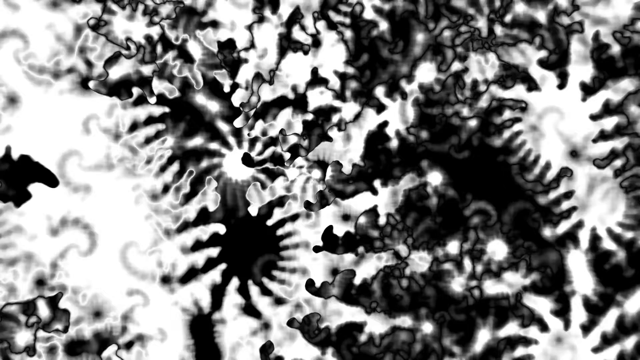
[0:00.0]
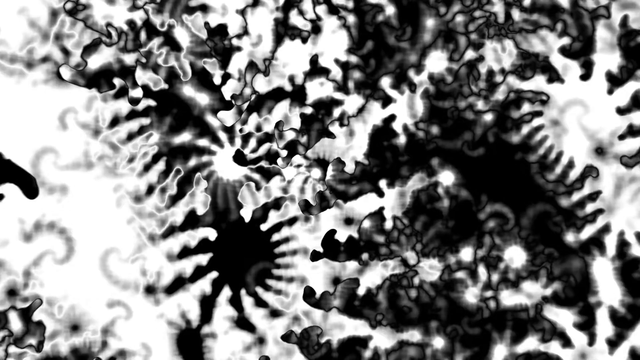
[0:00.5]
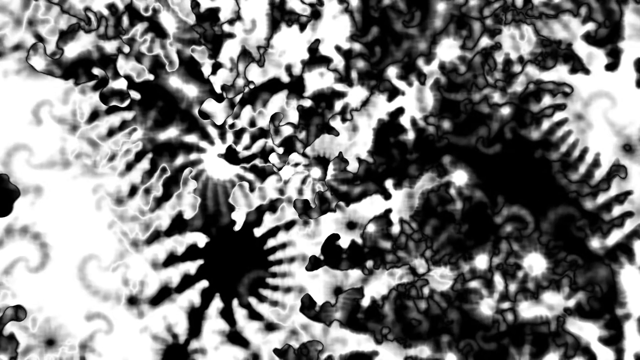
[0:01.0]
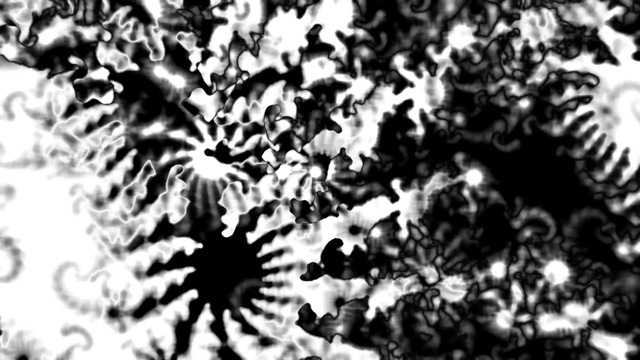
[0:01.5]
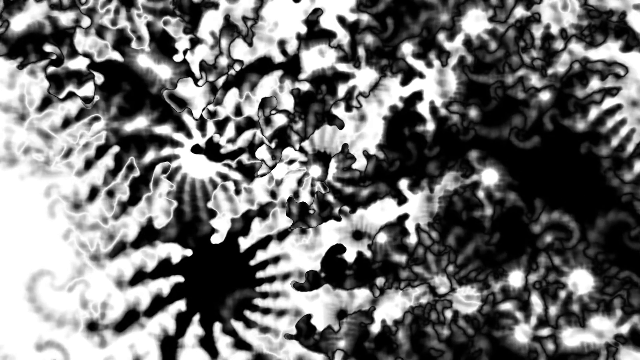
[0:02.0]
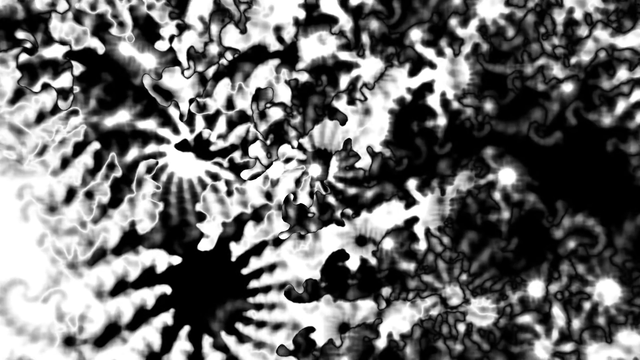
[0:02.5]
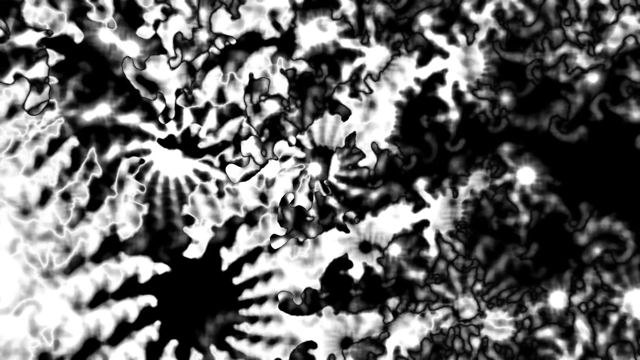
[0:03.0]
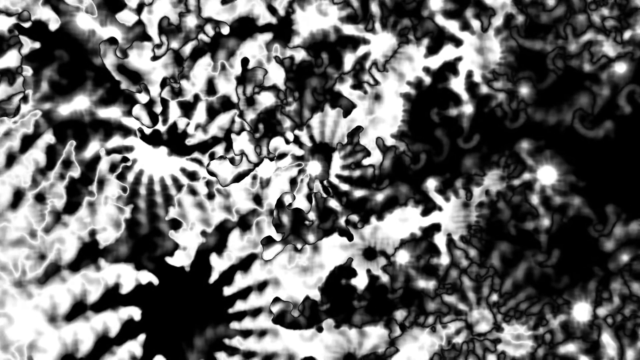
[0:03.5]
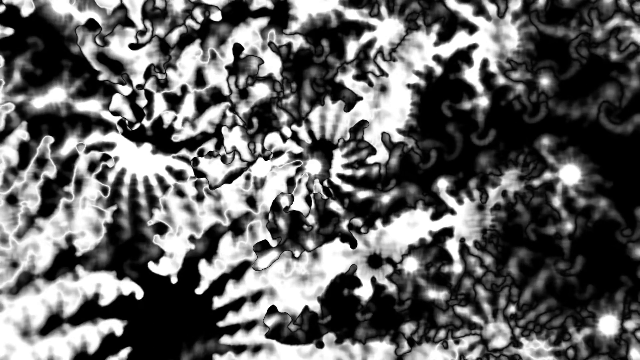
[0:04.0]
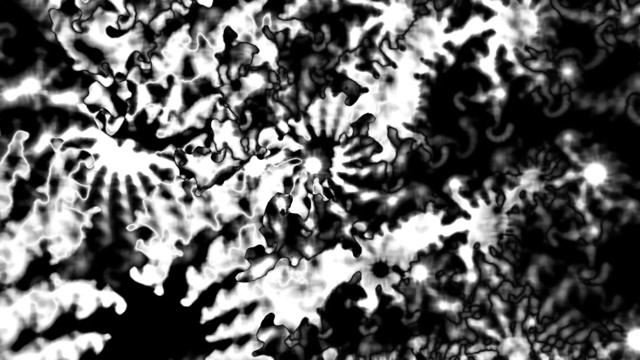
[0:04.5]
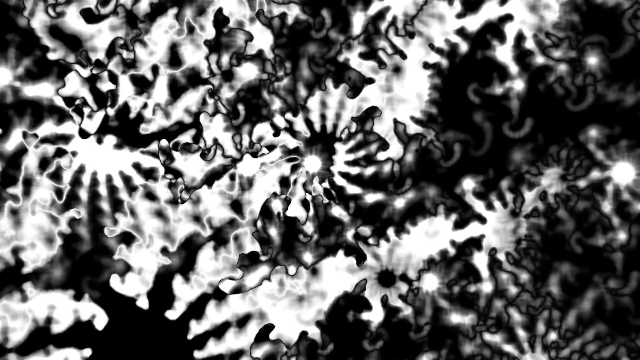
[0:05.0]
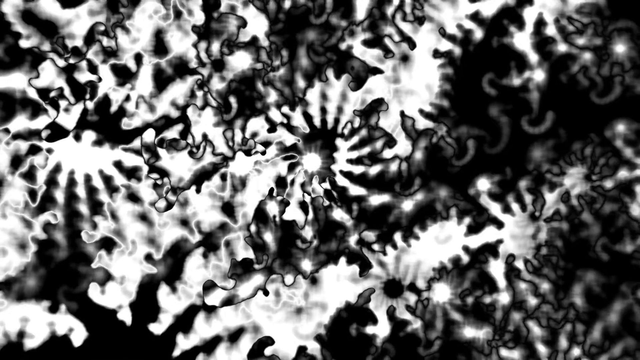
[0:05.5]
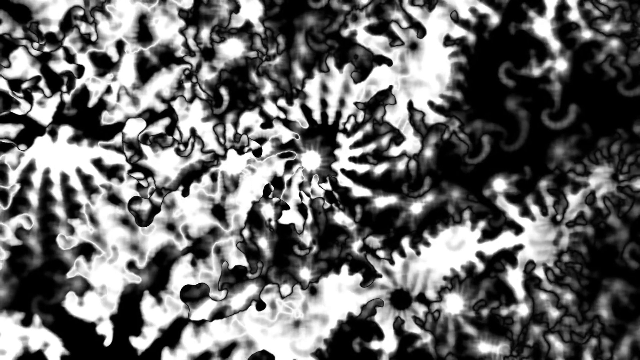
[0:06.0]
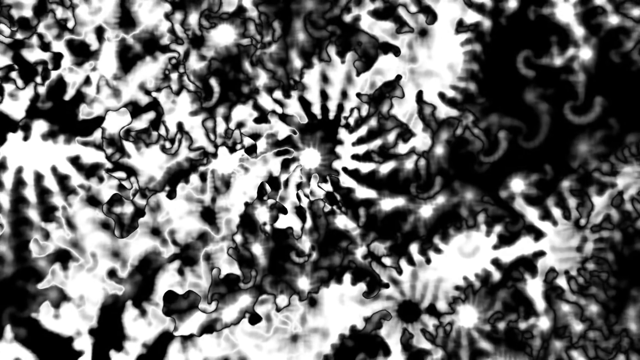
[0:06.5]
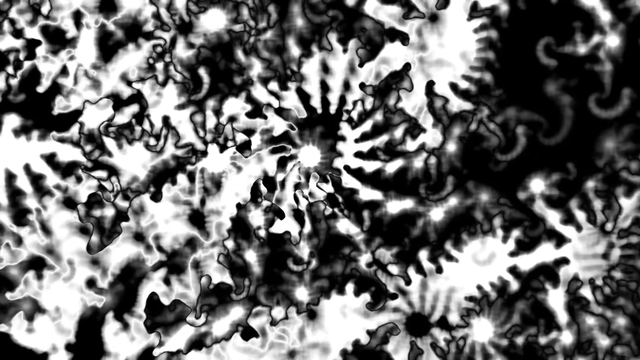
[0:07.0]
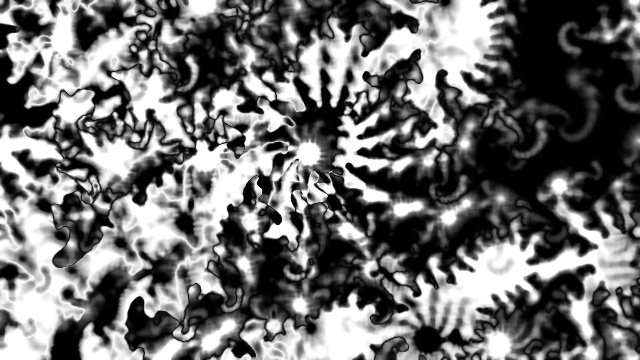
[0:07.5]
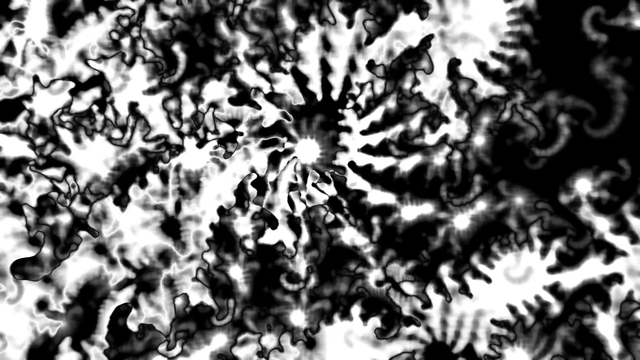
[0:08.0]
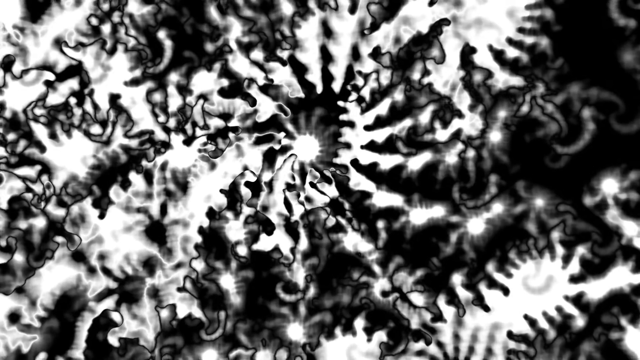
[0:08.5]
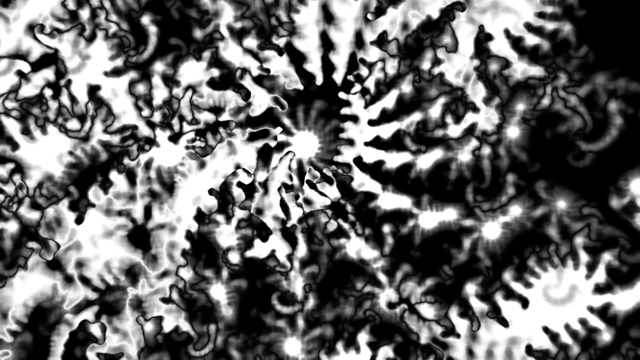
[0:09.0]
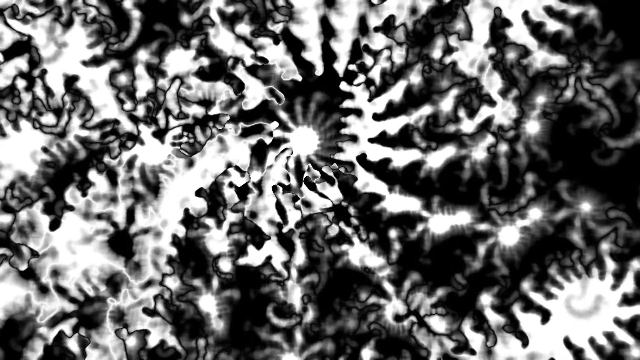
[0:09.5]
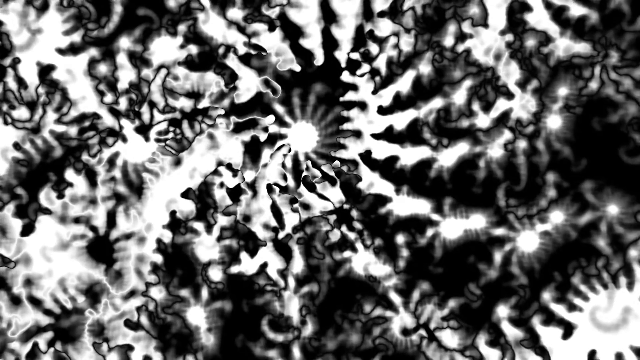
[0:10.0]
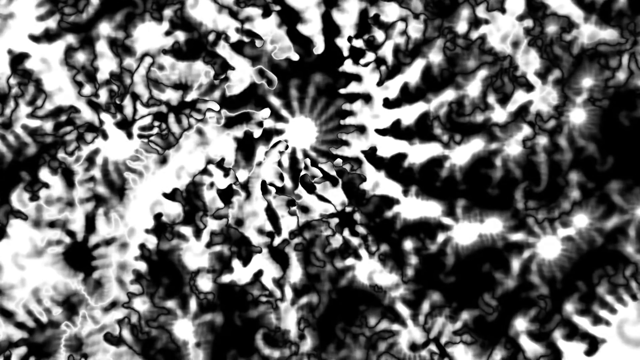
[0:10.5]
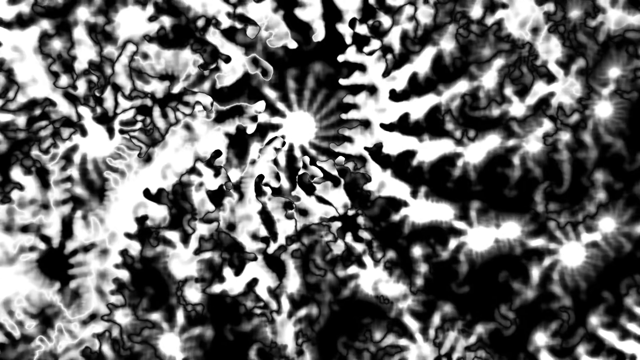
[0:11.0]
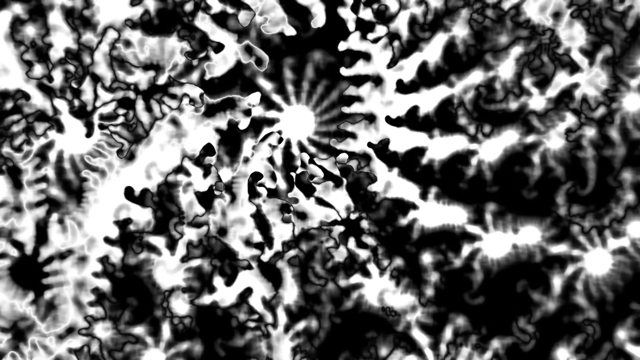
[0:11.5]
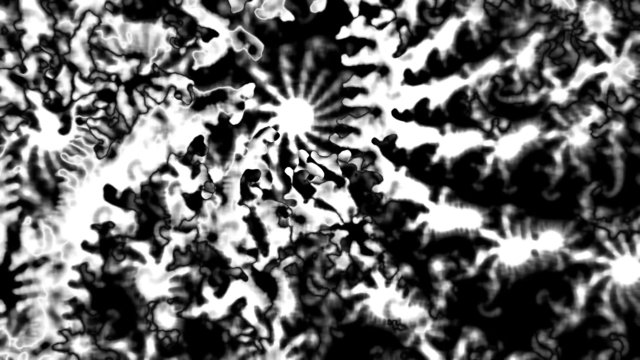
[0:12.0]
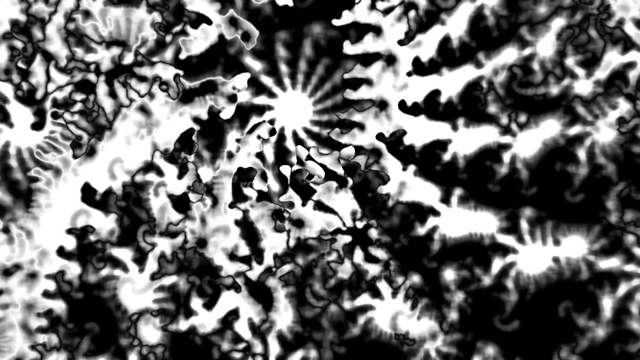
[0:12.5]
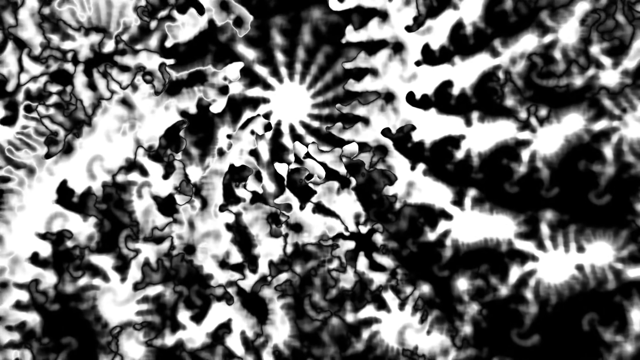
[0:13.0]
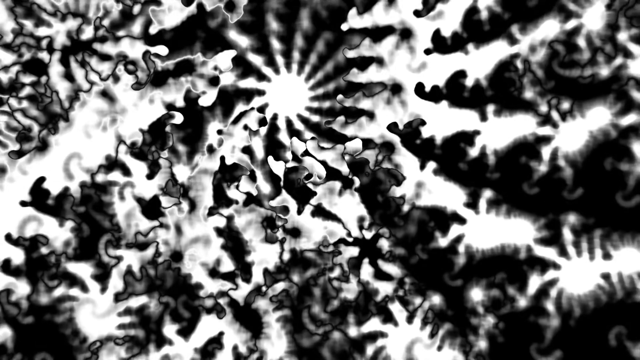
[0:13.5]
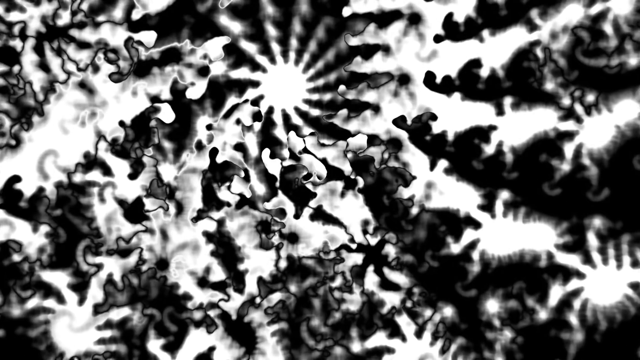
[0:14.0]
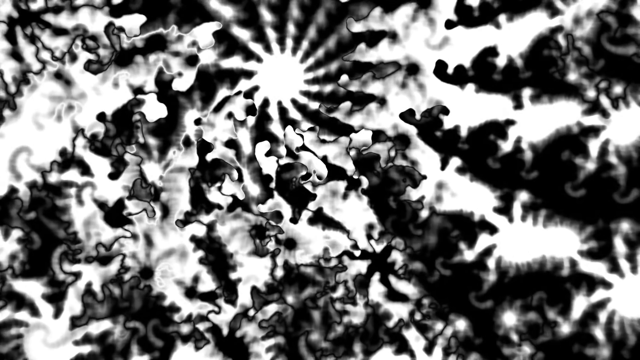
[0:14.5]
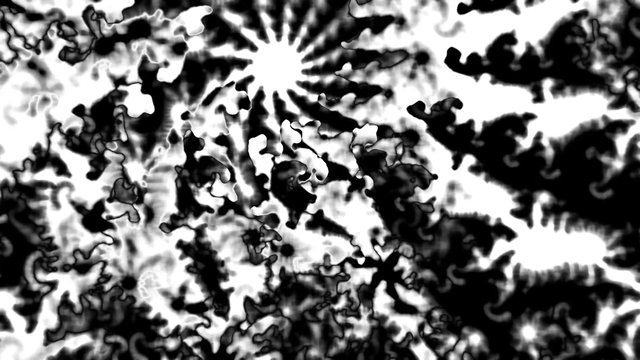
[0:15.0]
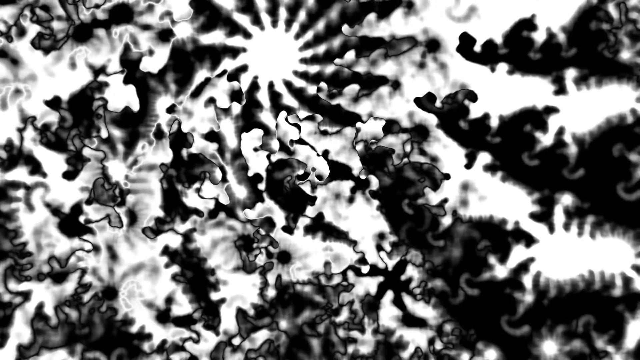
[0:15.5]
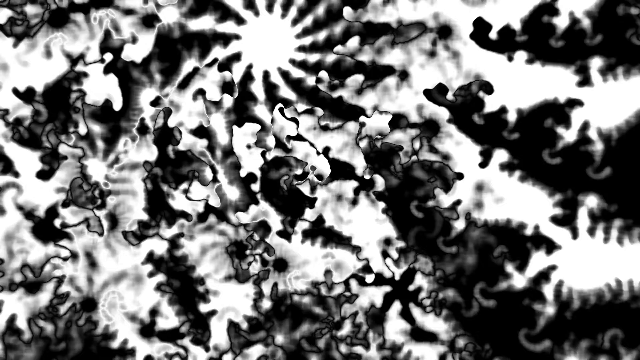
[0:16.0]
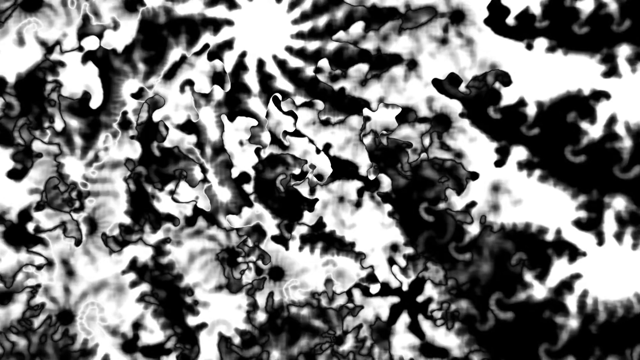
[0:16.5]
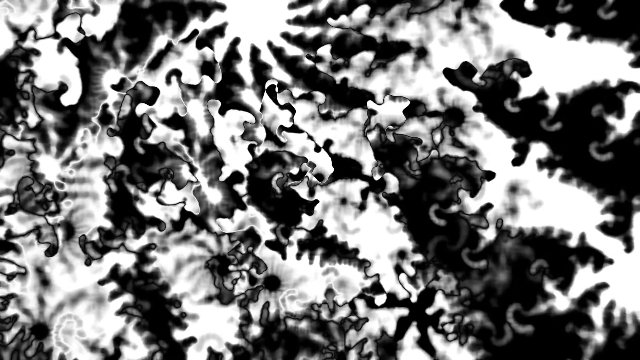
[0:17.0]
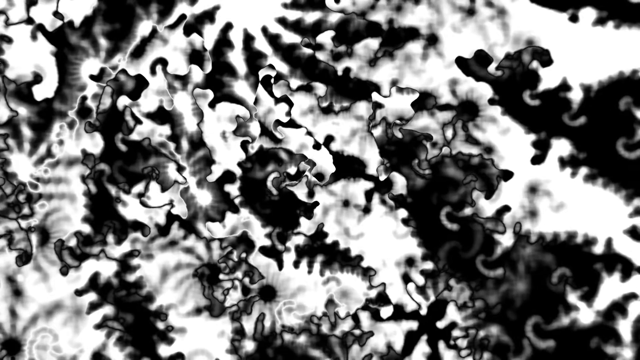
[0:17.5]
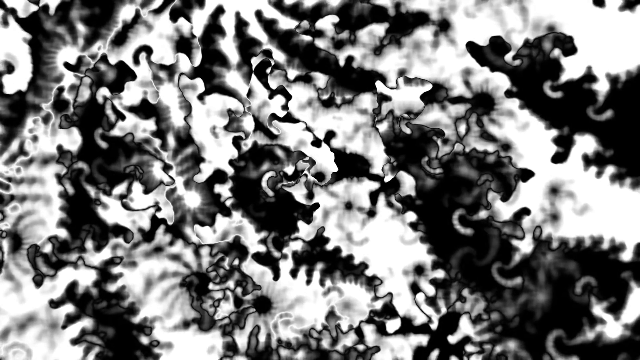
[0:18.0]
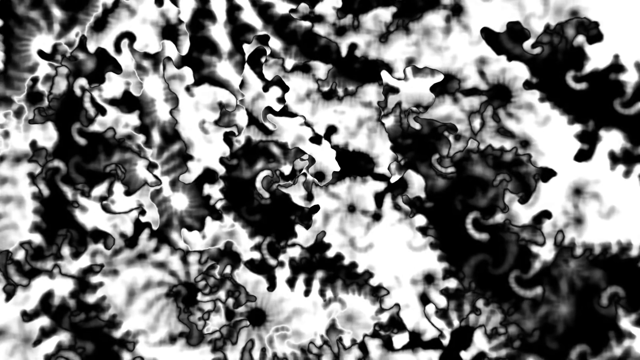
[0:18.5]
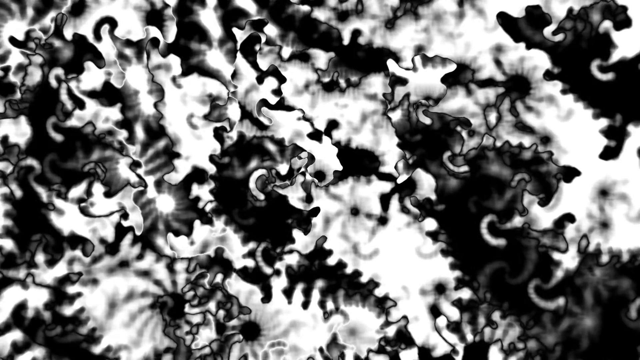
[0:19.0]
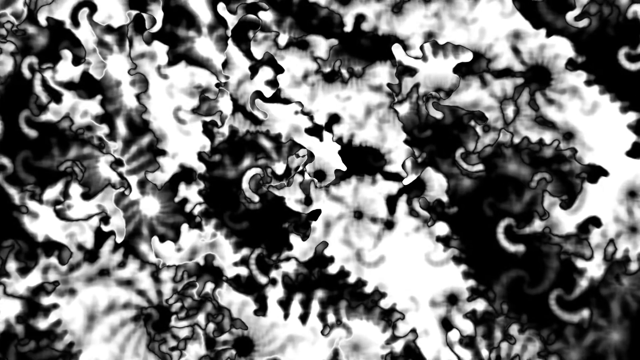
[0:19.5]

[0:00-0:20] A light appears and something seems to be forming while the view zooms in continuously. The content is unclear, but it seems to be leaves, a lot of them. The color, shape and pattern stay the same throughout the zoom; an opening starts small and becomes larger and larger.